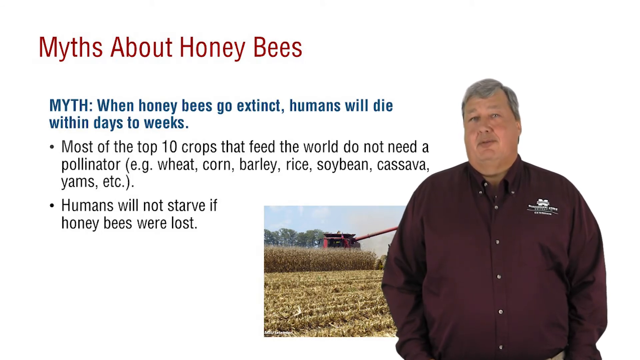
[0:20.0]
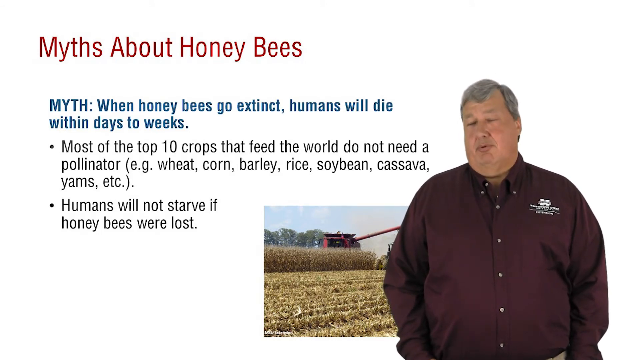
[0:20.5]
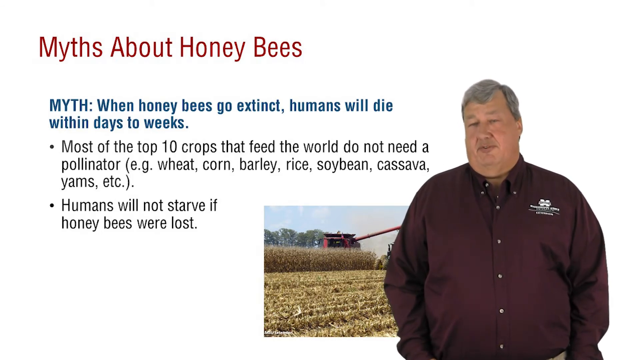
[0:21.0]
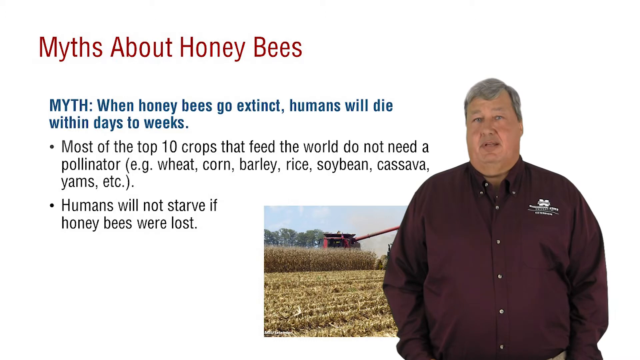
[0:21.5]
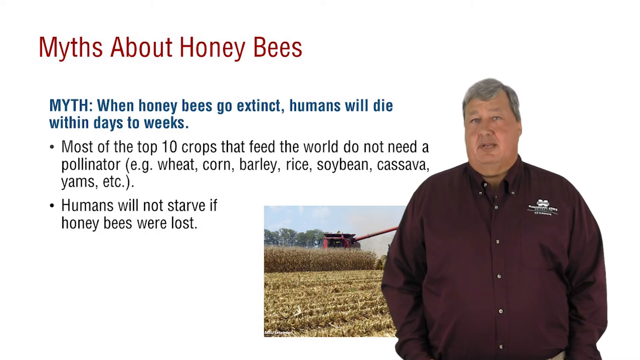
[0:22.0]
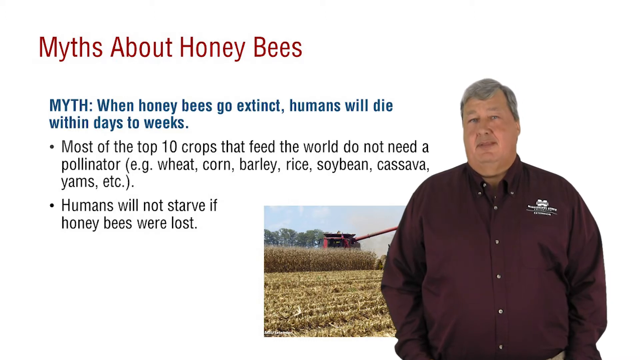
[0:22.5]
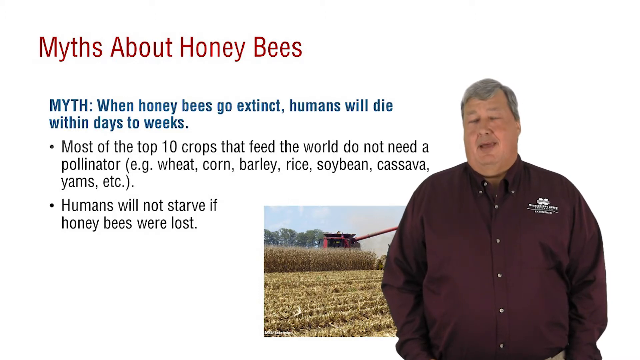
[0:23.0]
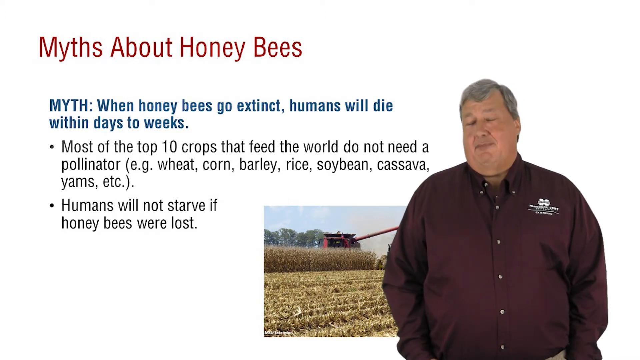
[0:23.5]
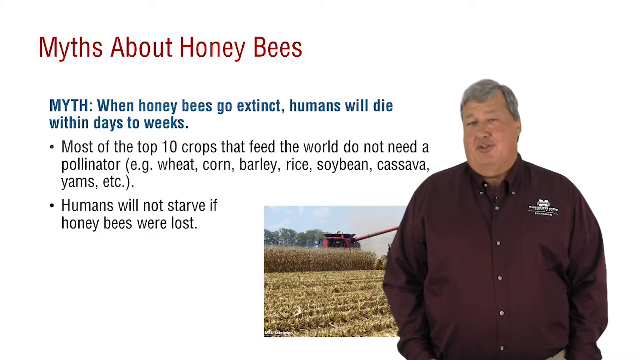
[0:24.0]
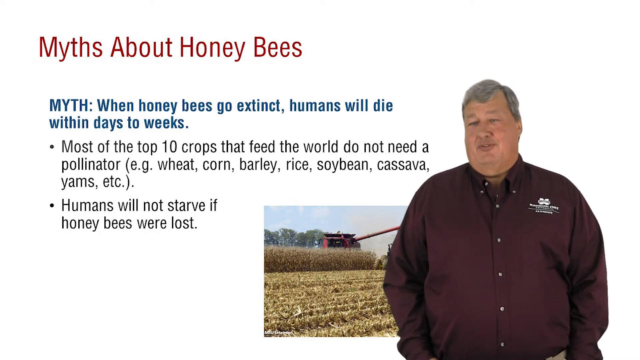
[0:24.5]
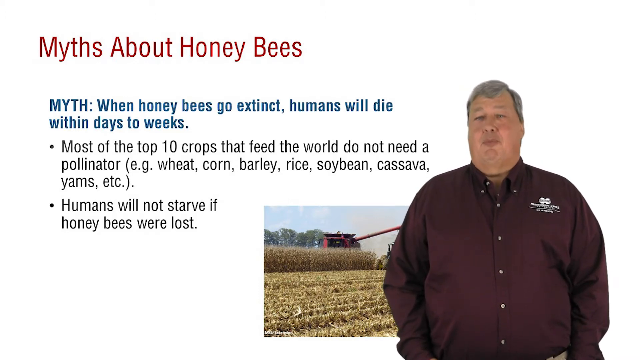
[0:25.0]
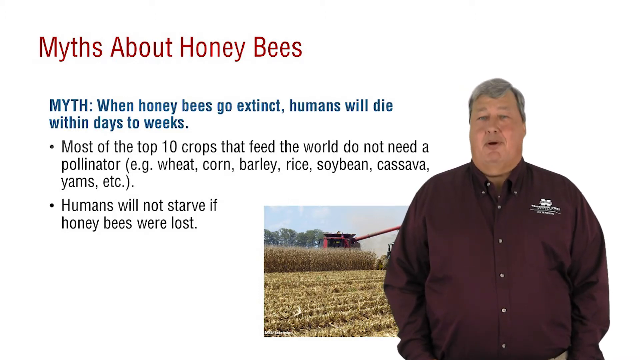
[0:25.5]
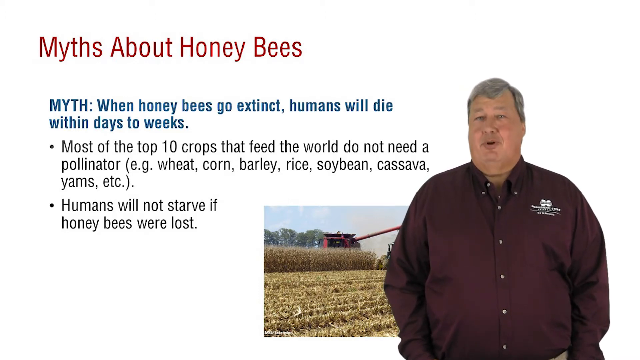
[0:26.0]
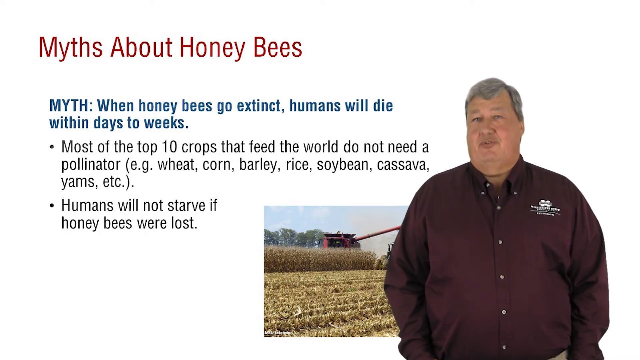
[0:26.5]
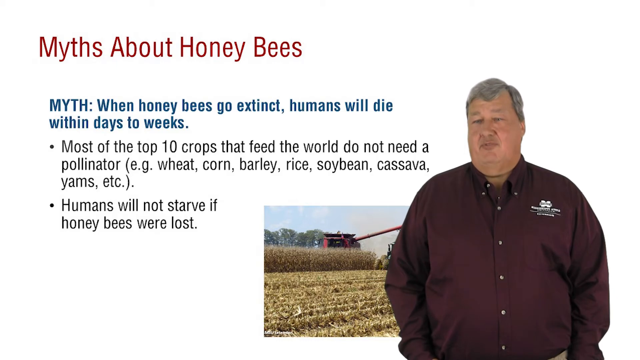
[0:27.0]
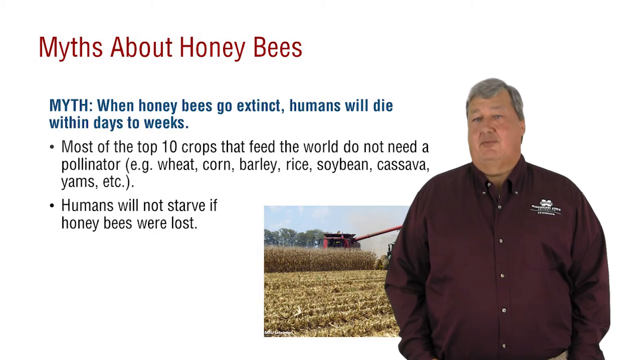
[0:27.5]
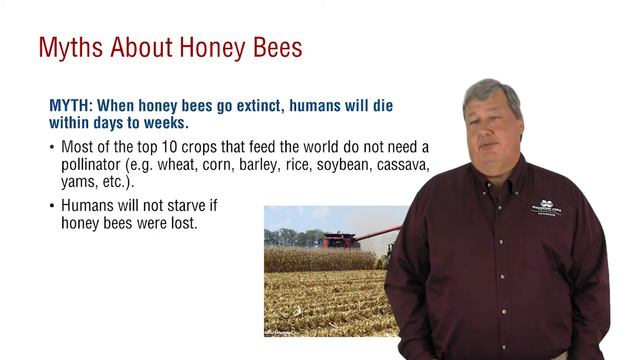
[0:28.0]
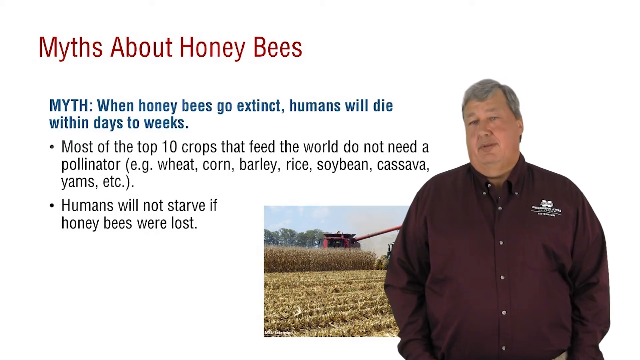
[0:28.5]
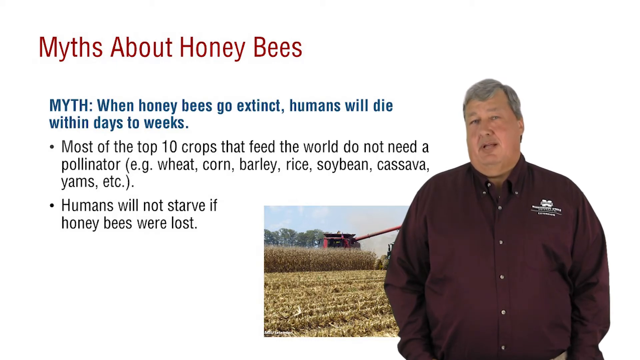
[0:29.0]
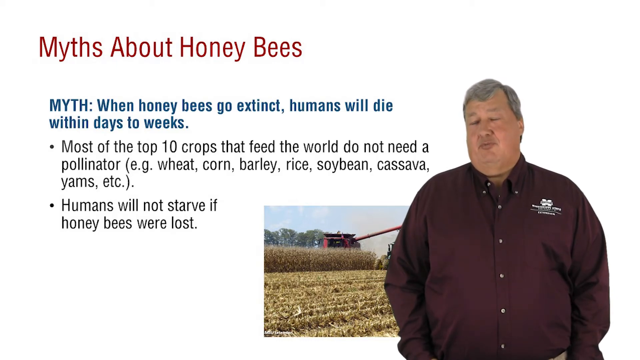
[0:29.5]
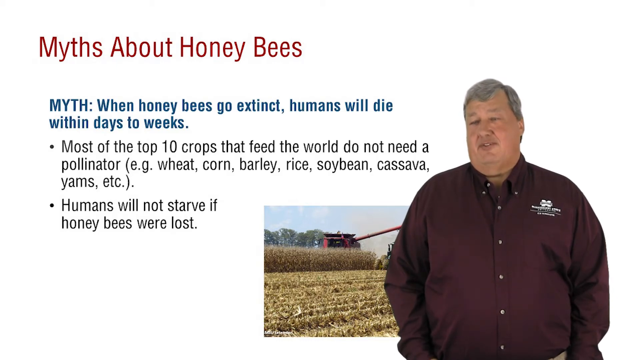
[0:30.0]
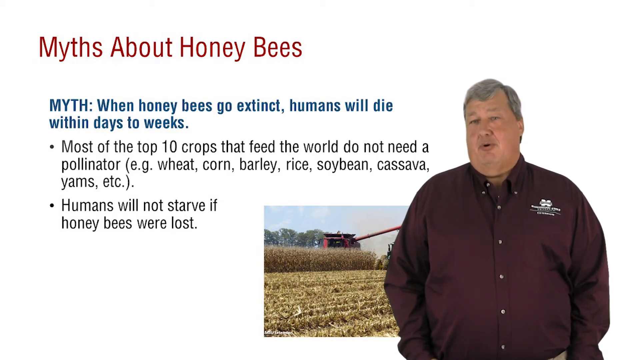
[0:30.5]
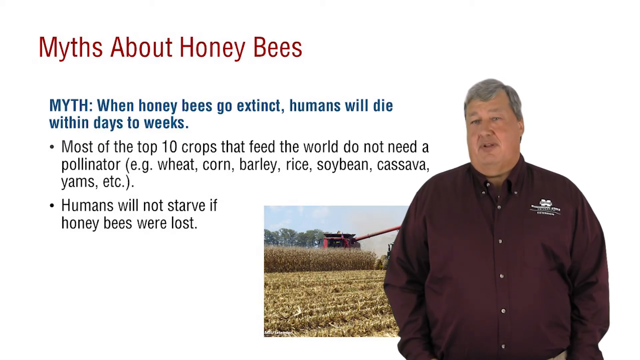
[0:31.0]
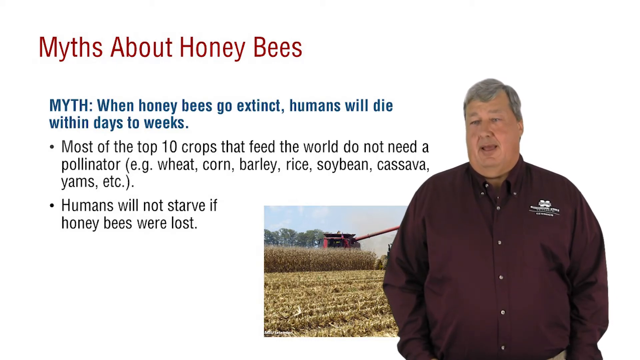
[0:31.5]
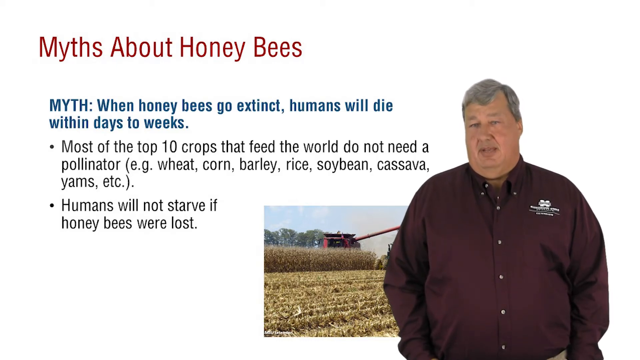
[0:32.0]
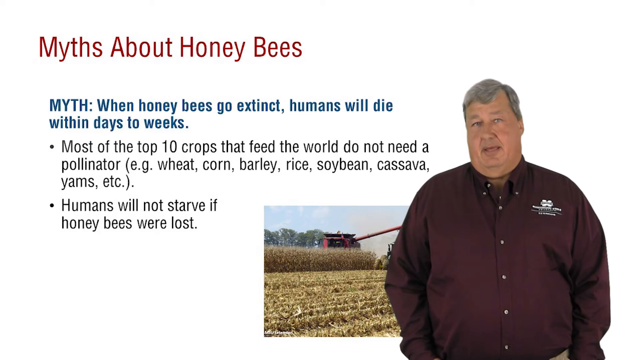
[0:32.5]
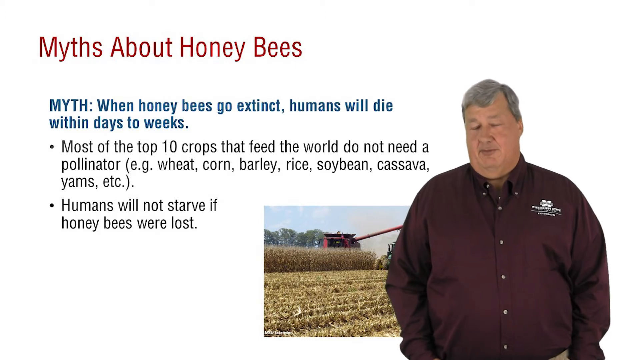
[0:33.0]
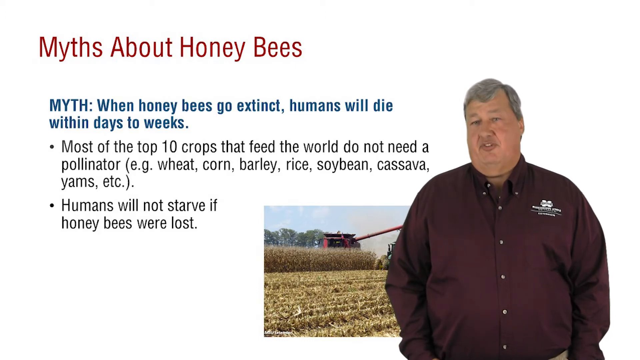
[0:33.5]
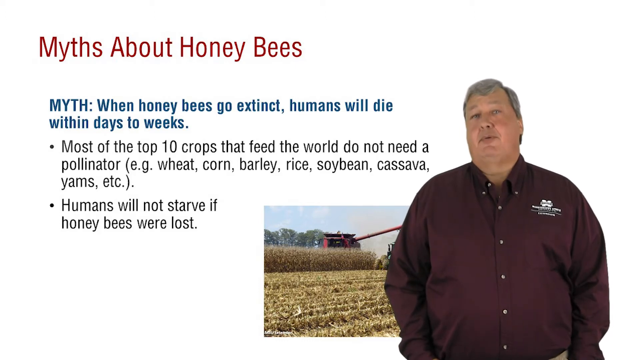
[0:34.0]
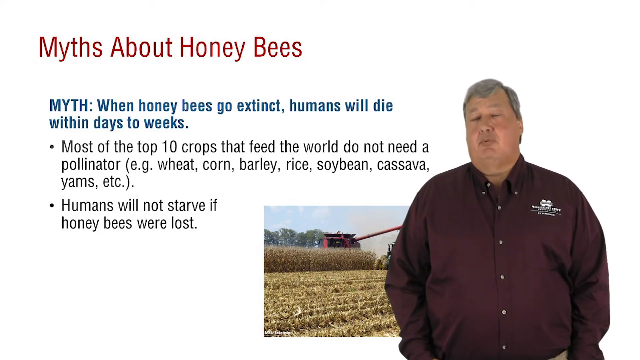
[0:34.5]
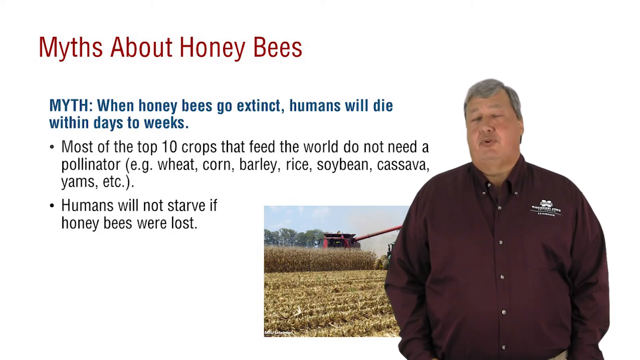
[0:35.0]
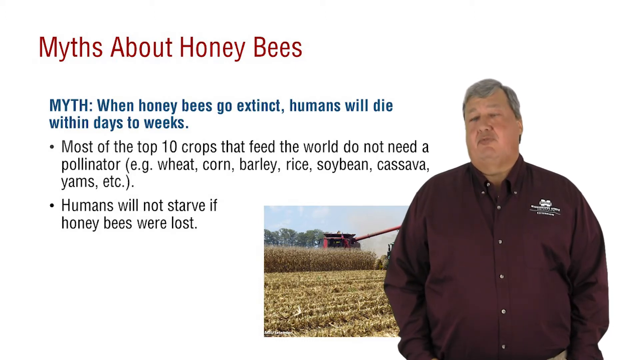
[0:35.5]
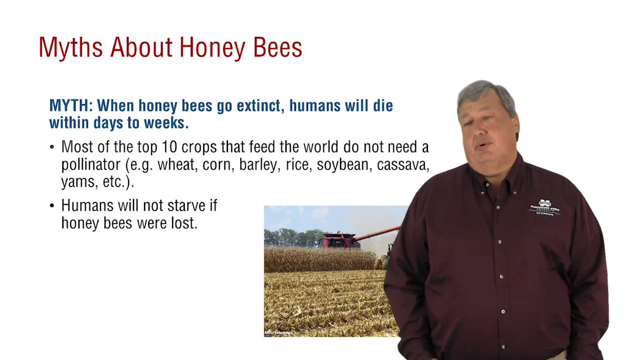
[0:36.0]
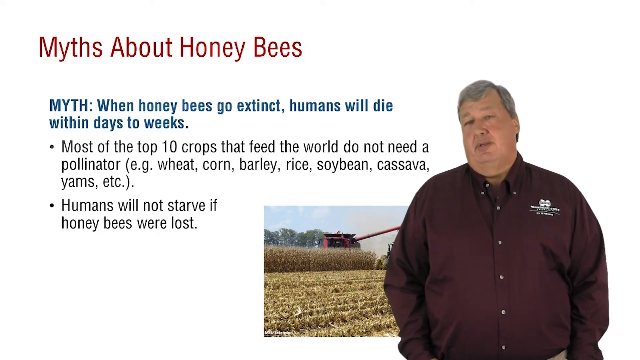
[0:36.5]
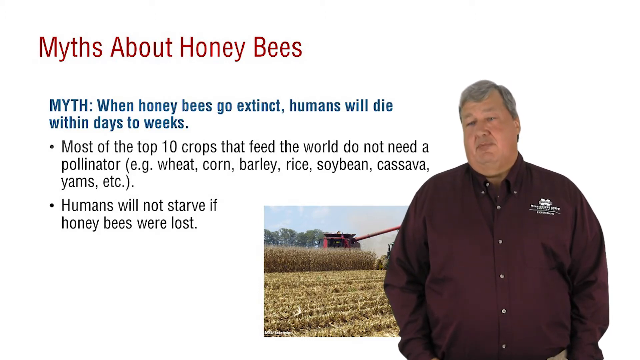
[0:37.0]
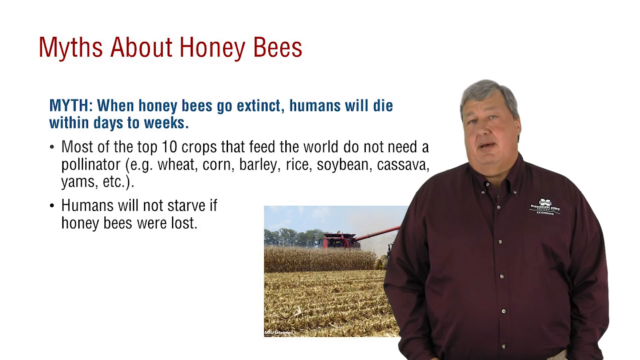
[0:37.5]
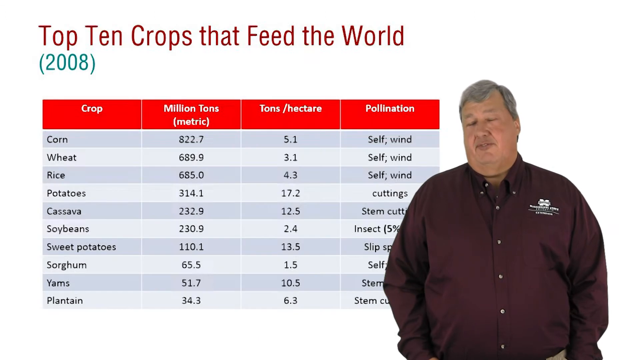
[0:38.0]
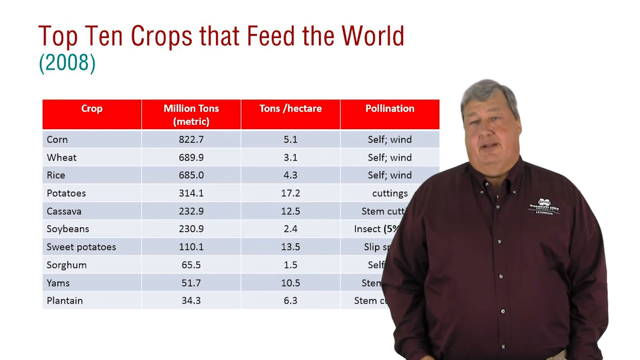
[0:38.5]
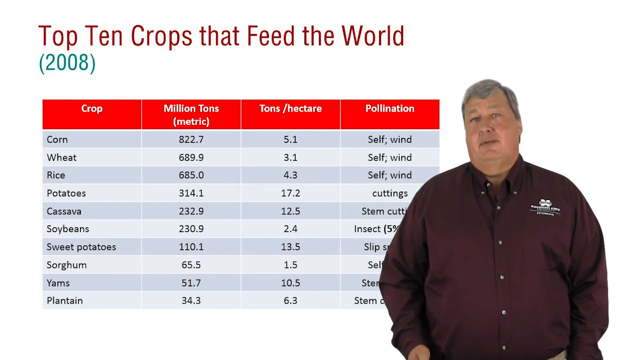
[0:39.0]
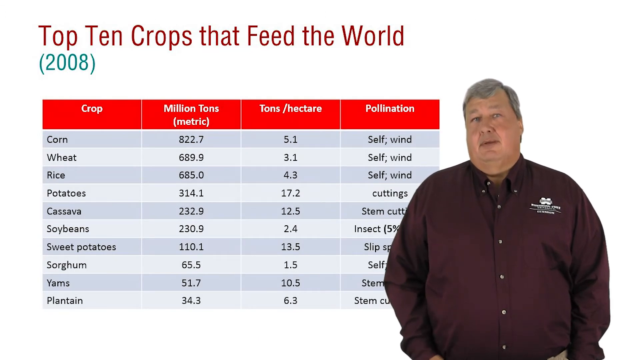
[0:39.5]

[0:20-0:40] A slide with a white background has a heading at the top left in large brown letters reading "myths about honeybees." Below it, in smaller blue letters: "Myth: When honeybees go extinct, humans will die within days to weeks." Underneath are two bullet points in black text. The first reads "most of the top 10 crops that feed the world do not need a pollinator (e.g. wheat, corn, barley, rice, soybean, cassava, yams, et cetera.)" The second reads "humans will not starve if honeybees were lost." To the right is a small image of what looks like a field of tan-colored crops on a farm, with a red farming vehicle with a long crane coming out of it in the distance. On the right side of the slide is a cutout video of a man on a transparent background. He is a larger man wearing a dark maroon shirt with a white logo on his left chest; he looks to be in his late 40s or early 50s, with dark gray hair and a cleanly shaved face. He is speaking as if giving the presentation. The slide behind him then changes to one with a label at the top in brown text reading "top 10 crops that feed the world, 2008." Below it is a chart with the heading labels "crop," "million tons," "tons/hectare," and "pollination." Down the left side are the labels corn, wheat, rice, potatoes, cassava, soybeans, sweet potatoes, sorghum, yams, and plantains, with the measurements and pollination type for each crop filled in the cells, as the man on the right continues speaking.